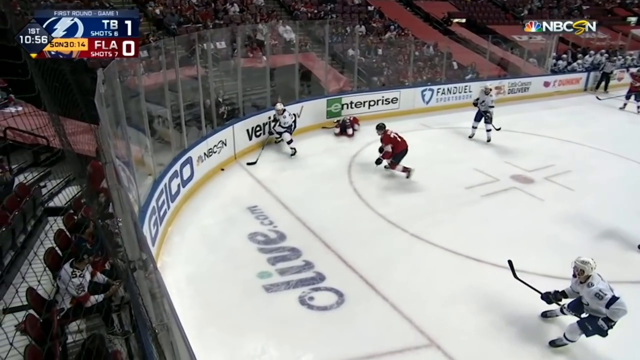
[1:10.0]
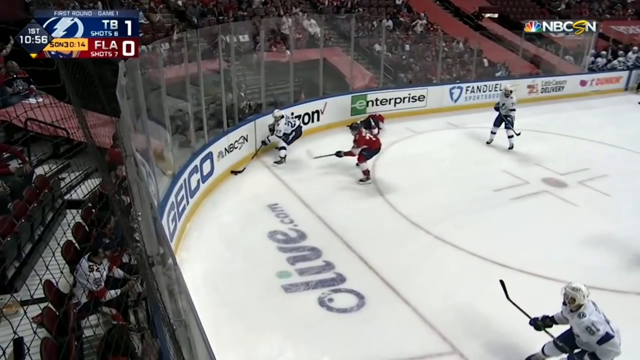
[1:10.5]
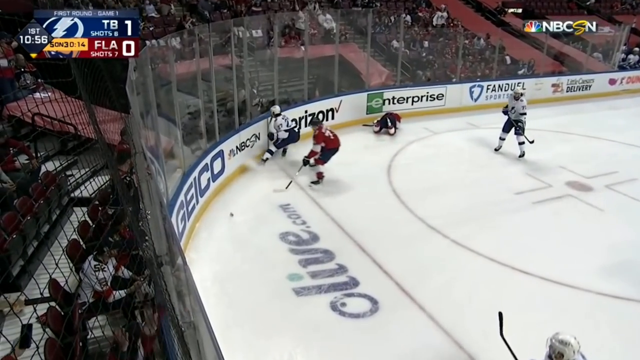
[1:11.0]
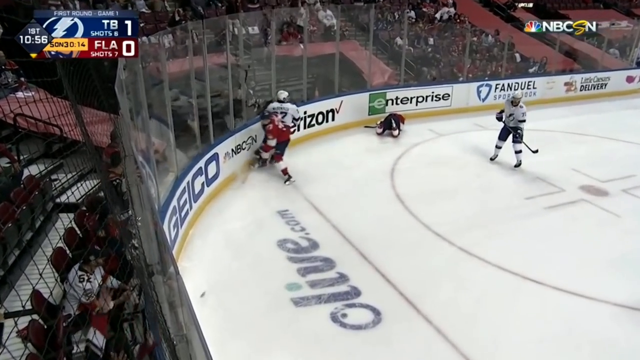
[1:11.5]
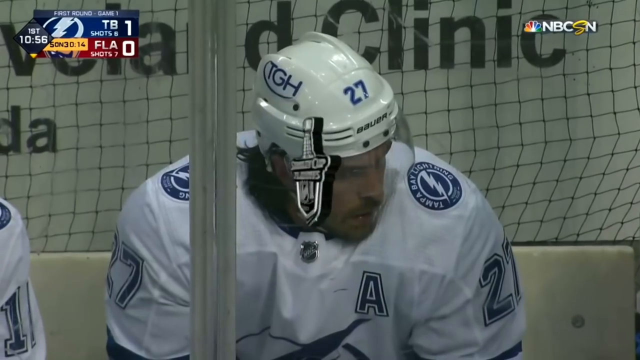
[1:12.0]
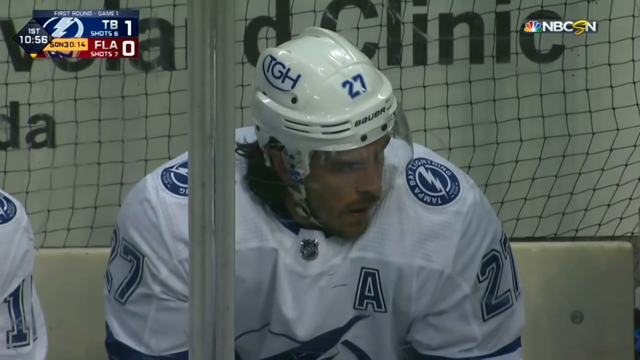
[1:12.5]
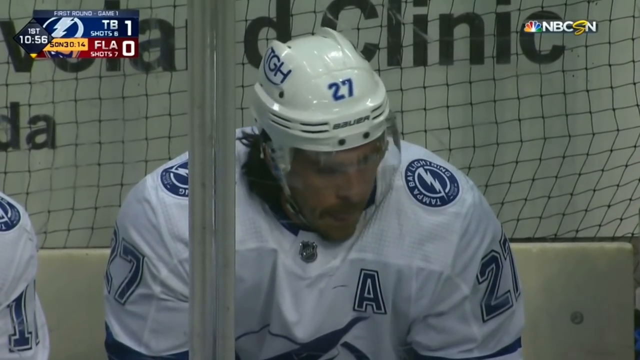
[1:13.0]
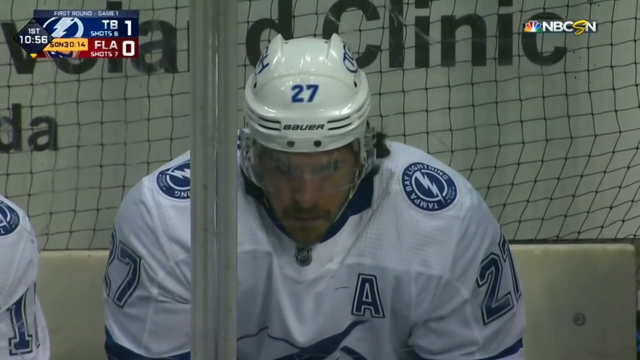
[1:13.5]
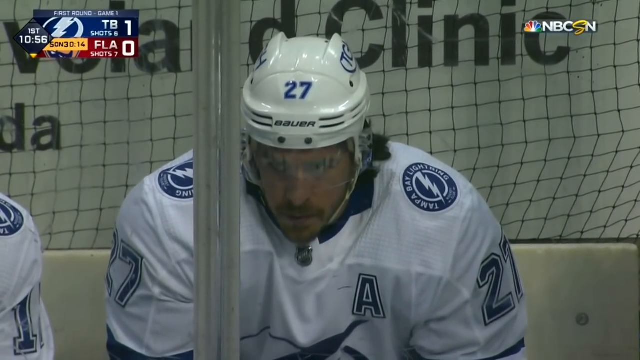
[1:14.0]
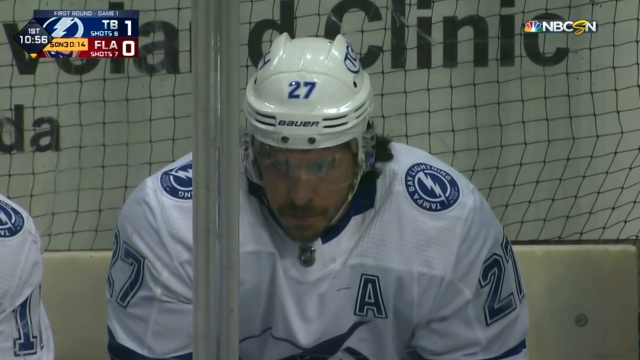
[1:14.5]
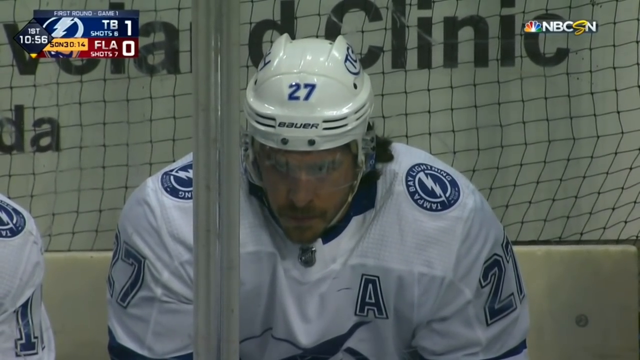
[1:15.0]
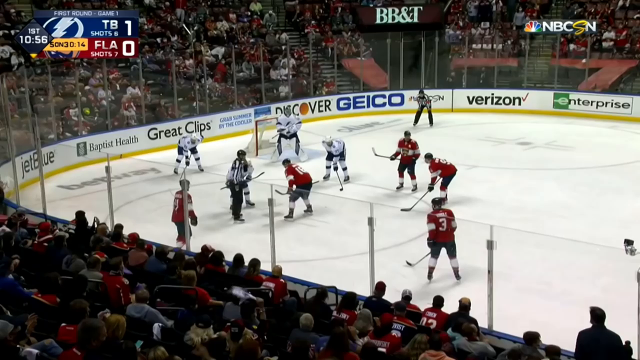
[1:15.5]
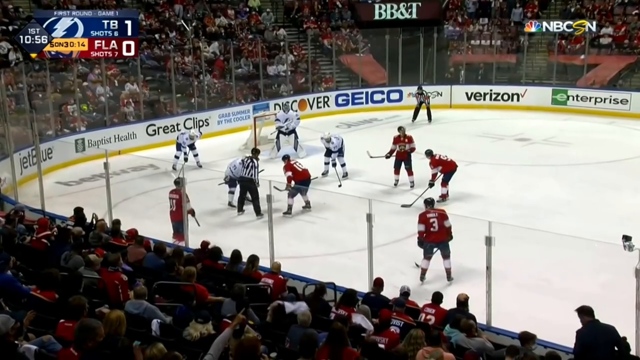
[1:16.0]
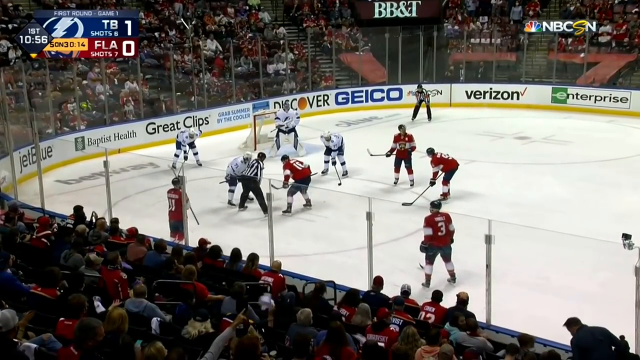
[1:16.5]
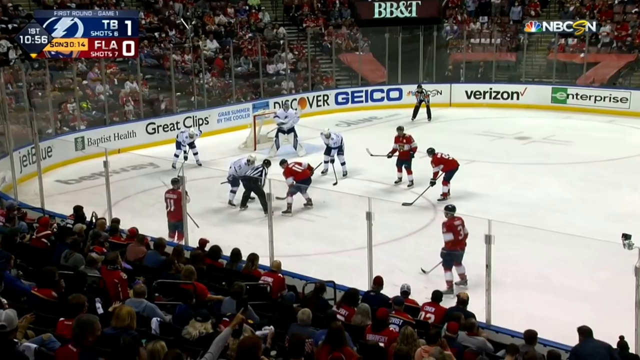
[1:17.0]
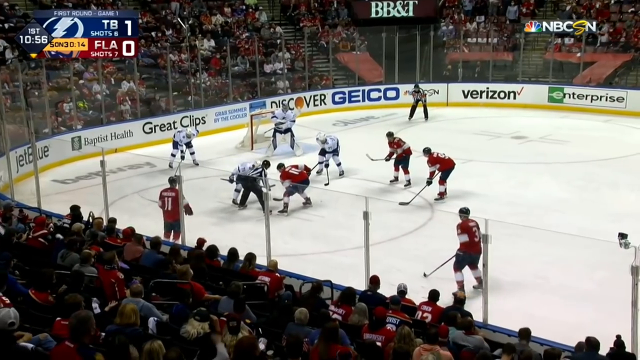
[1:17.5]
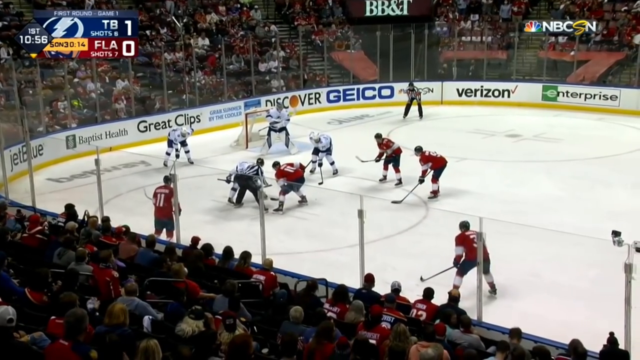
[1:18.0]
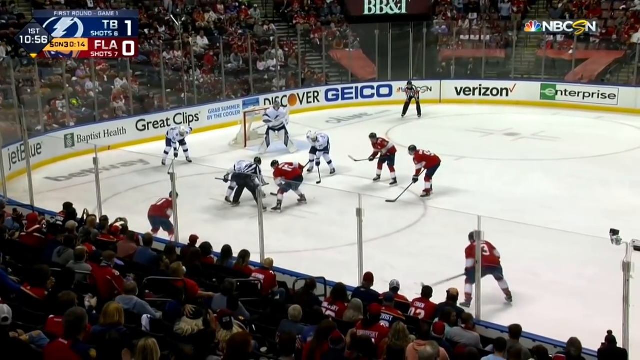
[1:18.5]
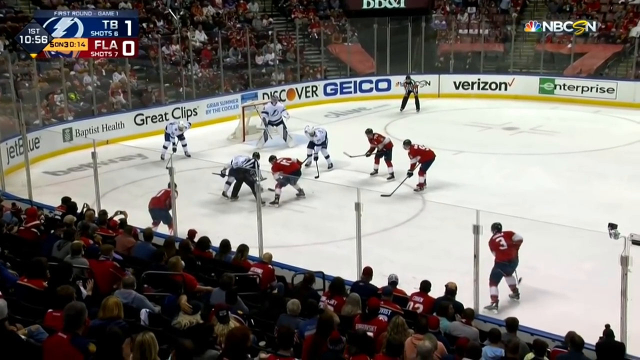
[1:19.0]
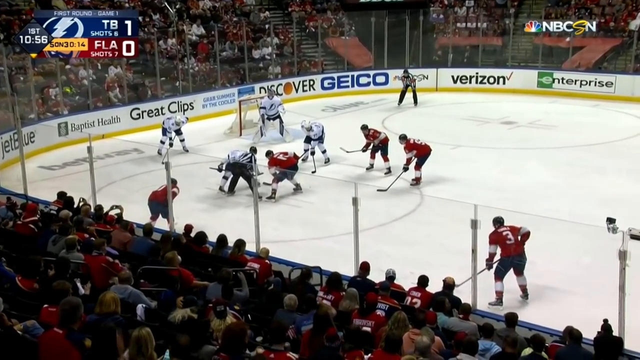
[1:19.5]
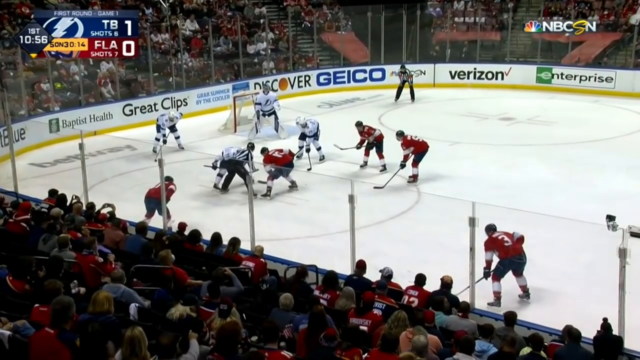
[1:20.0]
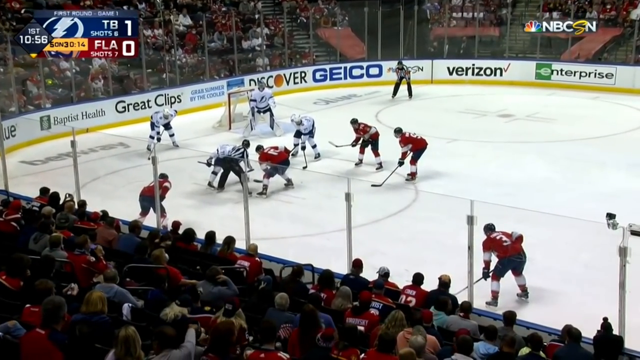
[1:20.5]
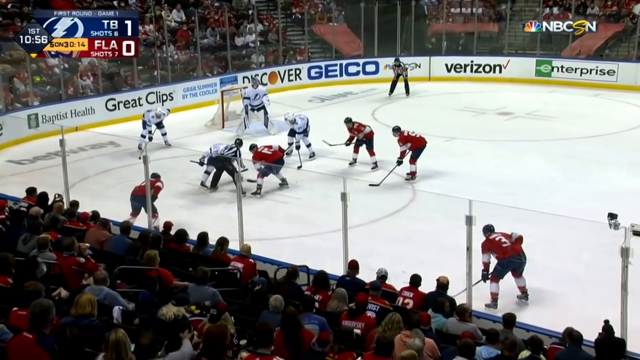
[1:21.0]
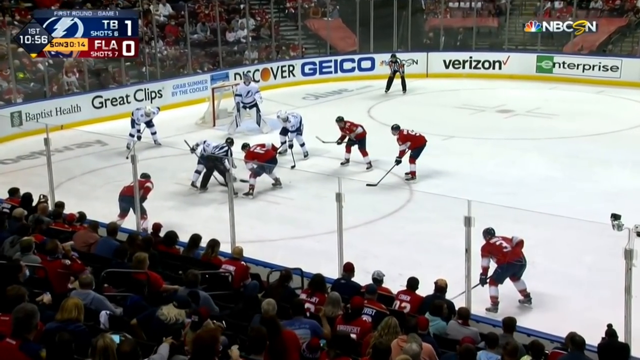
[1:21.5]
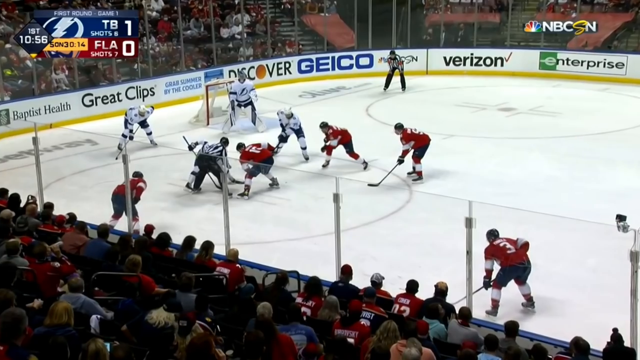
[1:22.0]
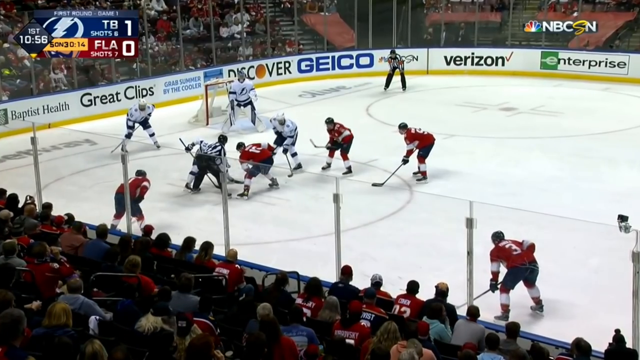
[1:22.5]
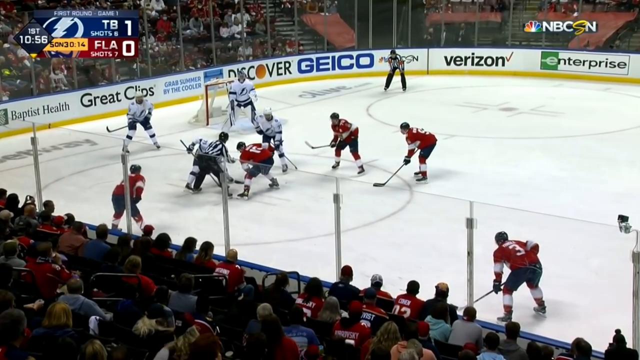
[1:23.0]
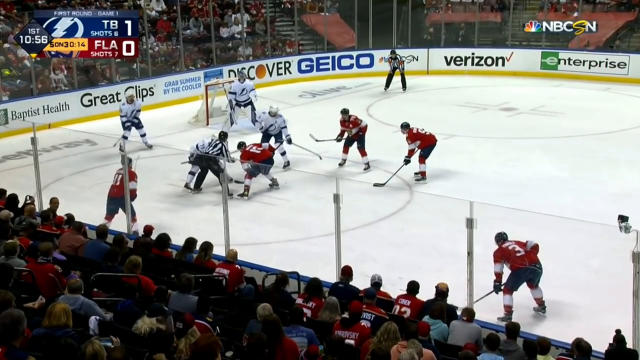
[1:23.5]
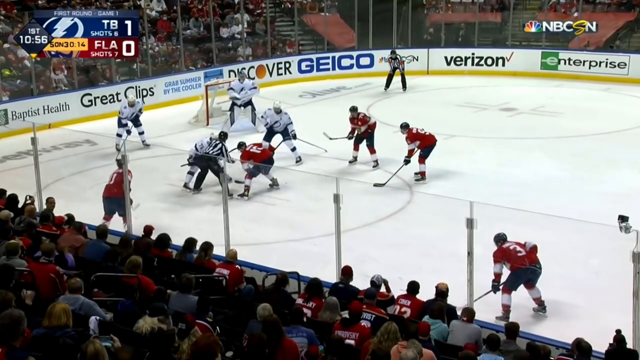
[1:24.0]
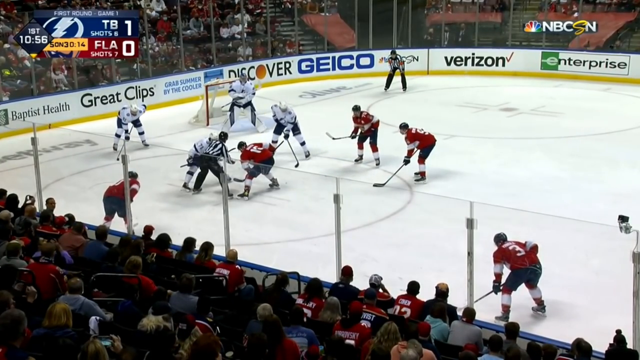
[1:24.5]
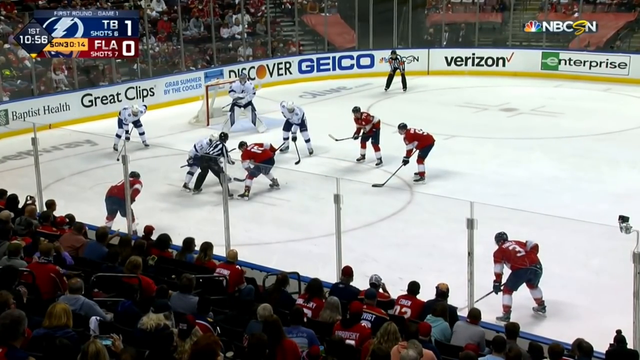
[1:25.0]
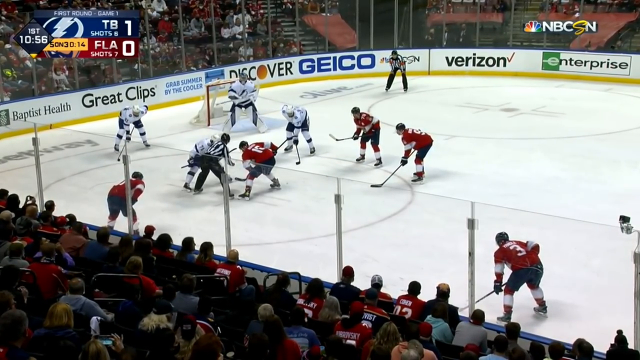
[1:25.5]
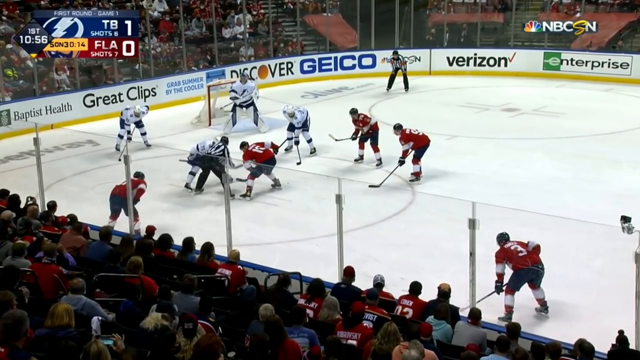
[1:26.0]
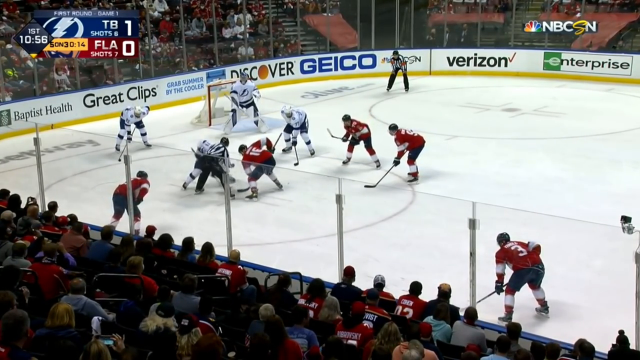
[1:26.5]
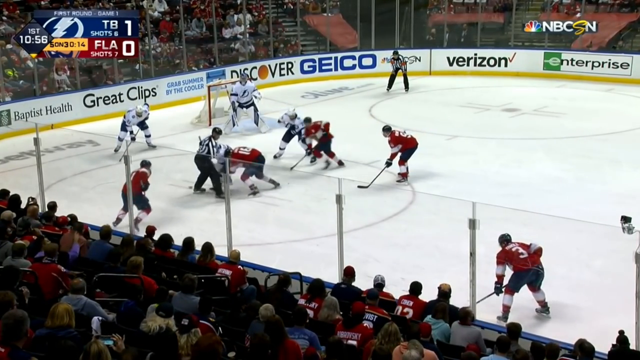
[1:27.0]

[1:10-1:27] The Stanley Cup Playoffs image looks like it retracts down into the screen. Two players in the middle are about to restart the game, and a referee stands there with the hockey puck, about to drop it onto the rink. Approximately seven people are on the rink. A shot shows player number 27, who appears to be in the penalty box behind the glass. The game resumes, and the players scuffle around trying to gain control of the puck. Another logo under the ice appears to be olive.com, and there is also what appears to be a FanDuel logo.